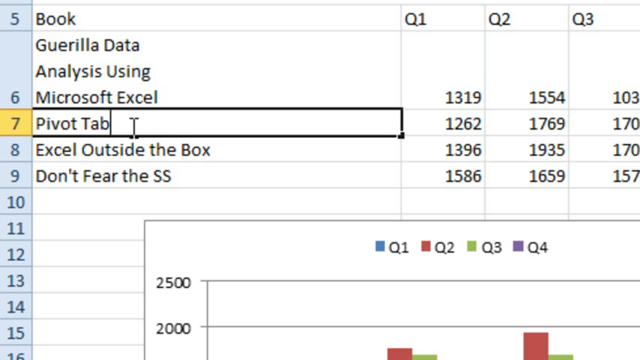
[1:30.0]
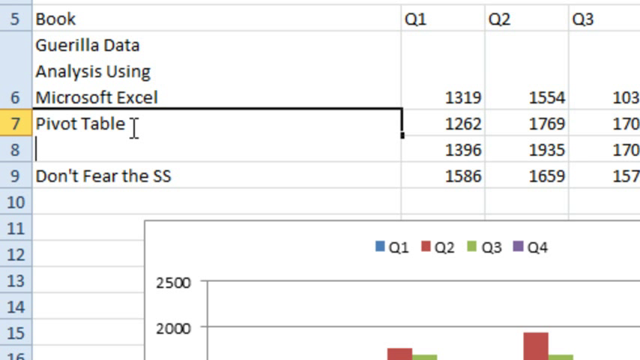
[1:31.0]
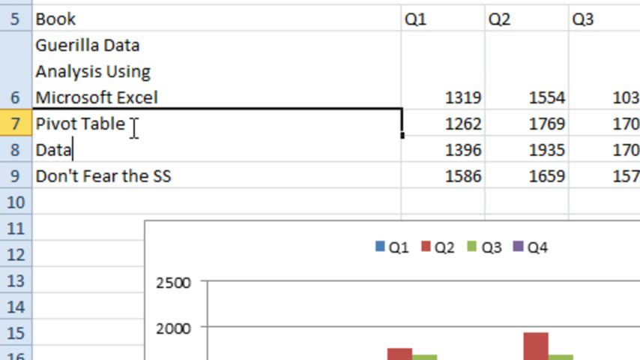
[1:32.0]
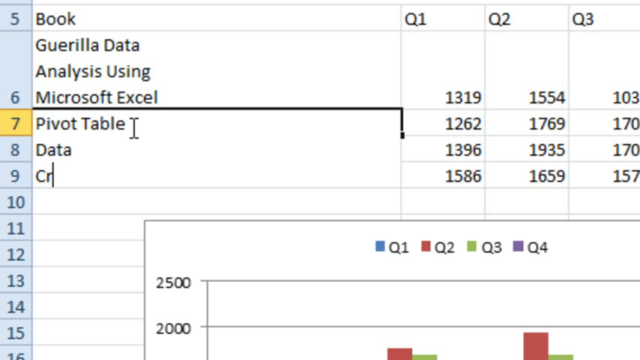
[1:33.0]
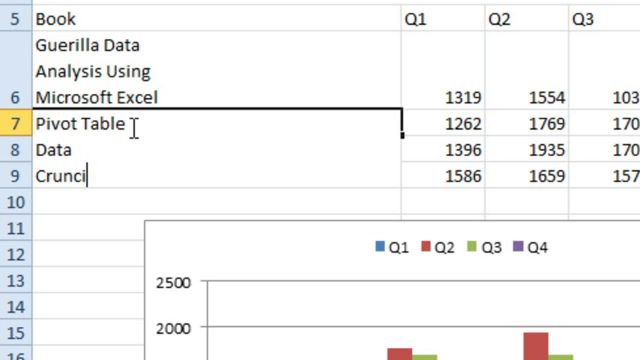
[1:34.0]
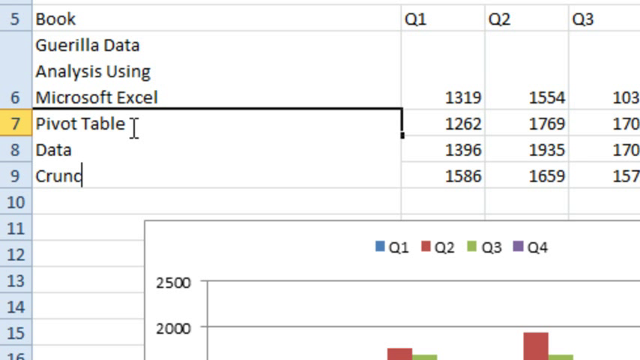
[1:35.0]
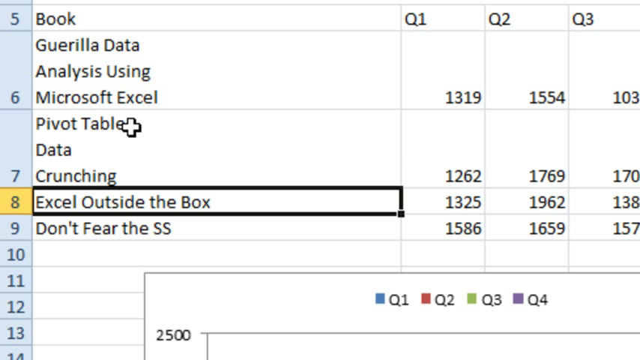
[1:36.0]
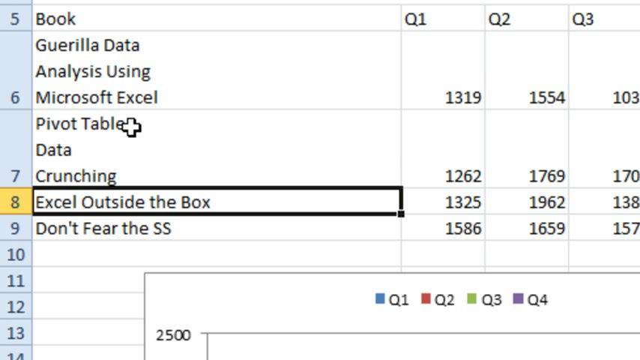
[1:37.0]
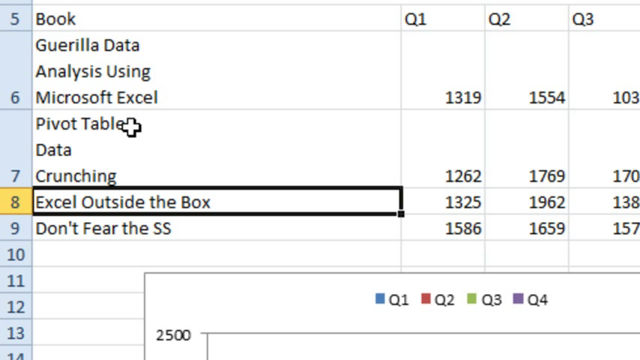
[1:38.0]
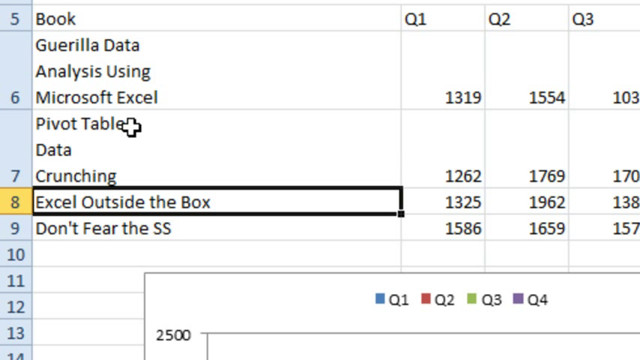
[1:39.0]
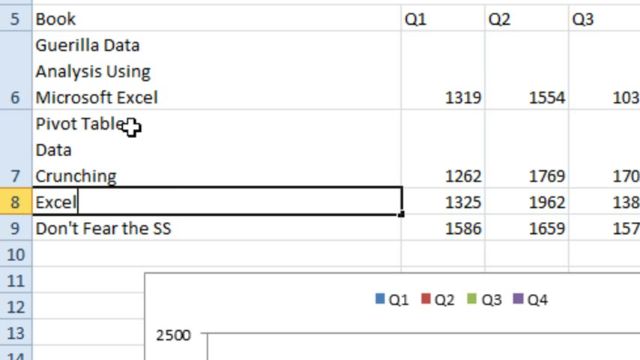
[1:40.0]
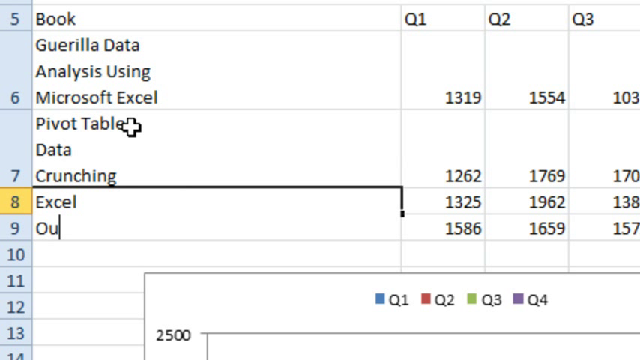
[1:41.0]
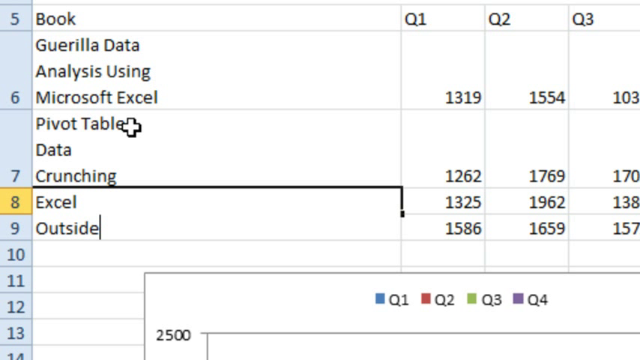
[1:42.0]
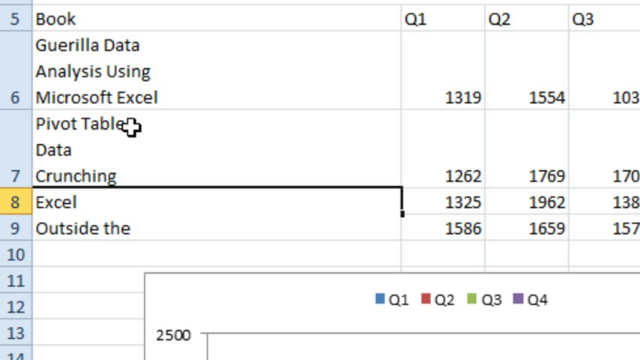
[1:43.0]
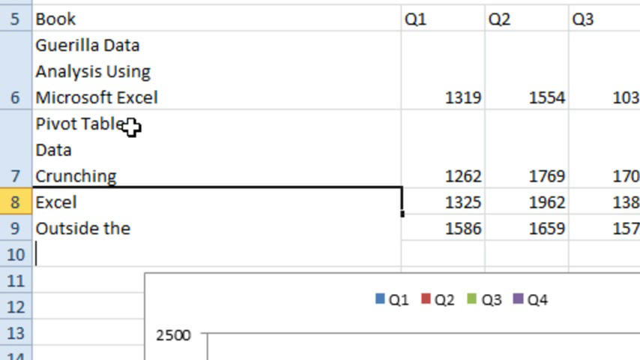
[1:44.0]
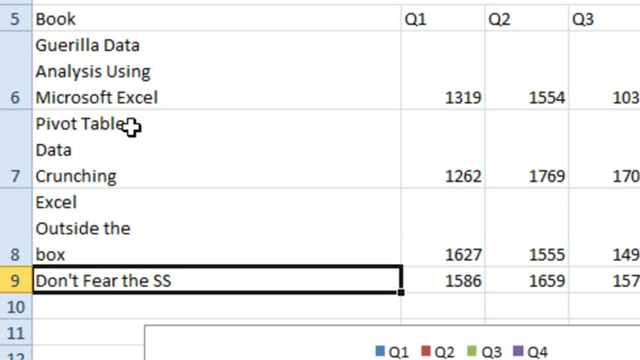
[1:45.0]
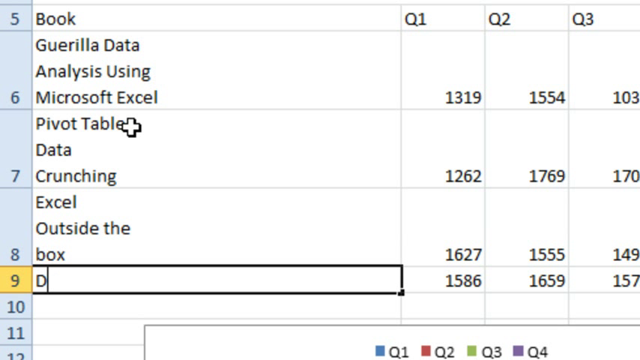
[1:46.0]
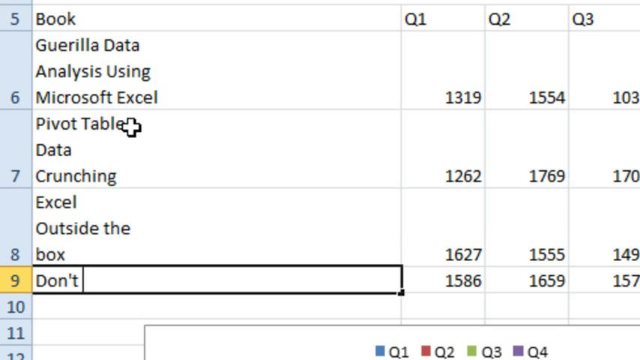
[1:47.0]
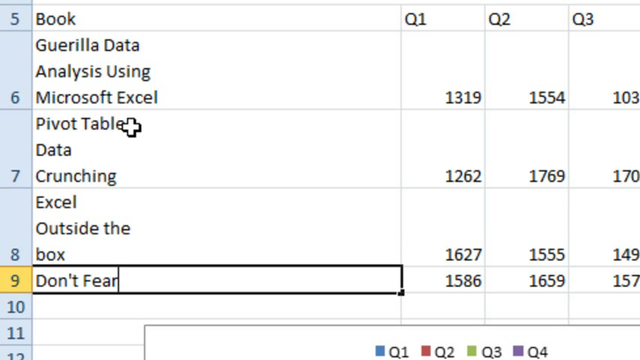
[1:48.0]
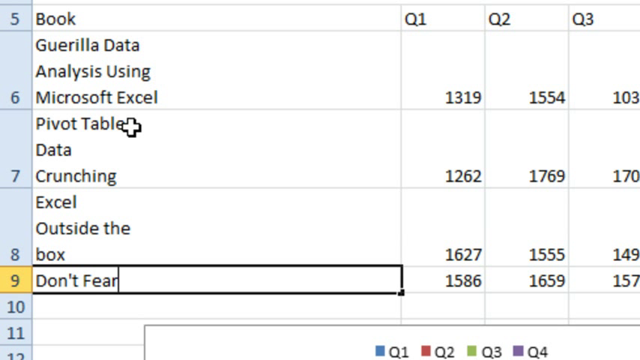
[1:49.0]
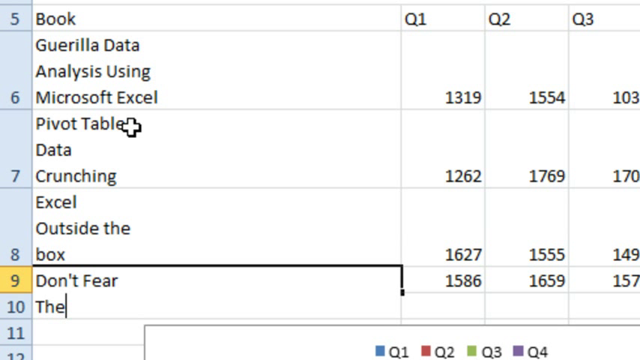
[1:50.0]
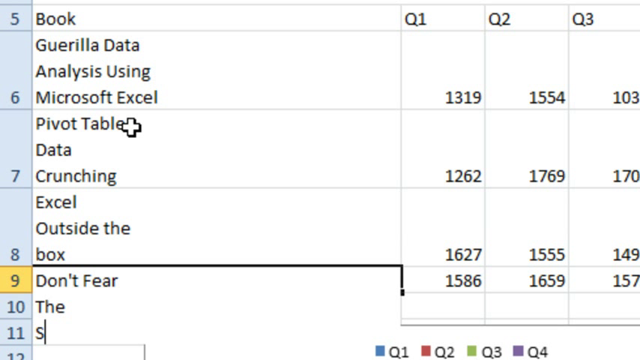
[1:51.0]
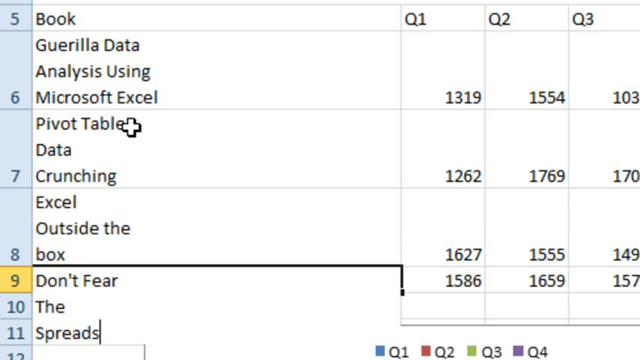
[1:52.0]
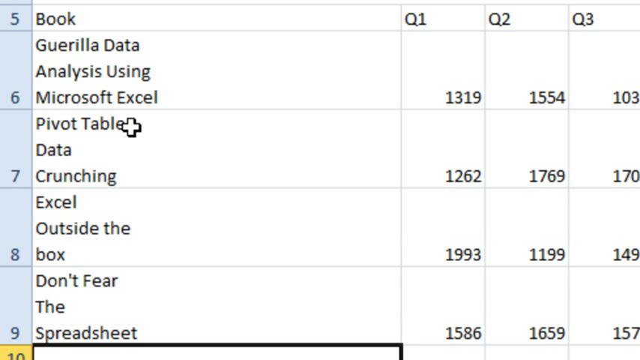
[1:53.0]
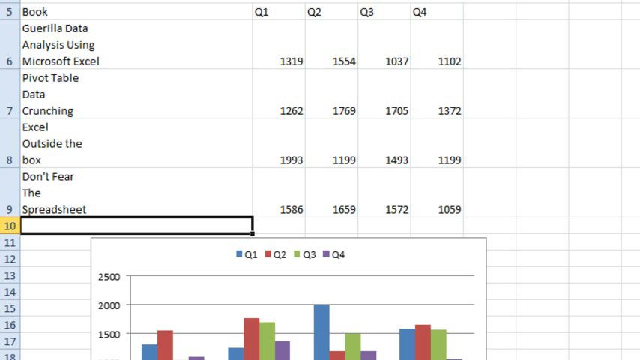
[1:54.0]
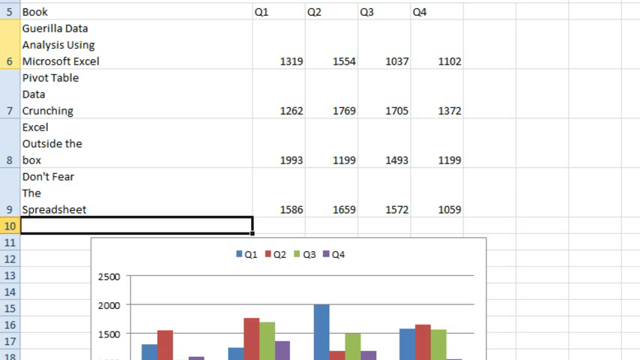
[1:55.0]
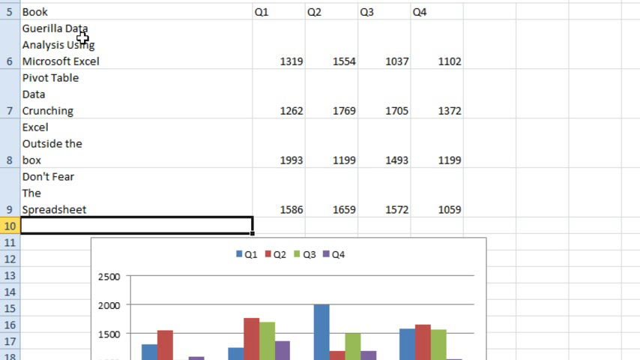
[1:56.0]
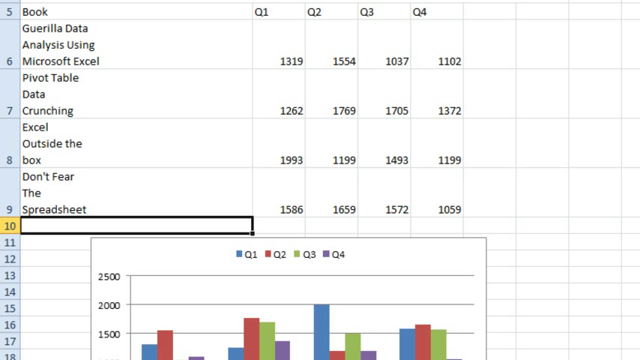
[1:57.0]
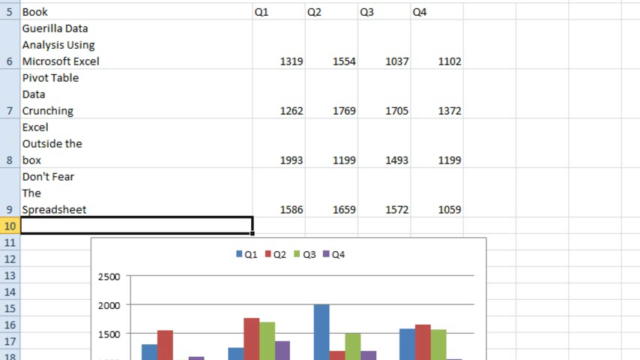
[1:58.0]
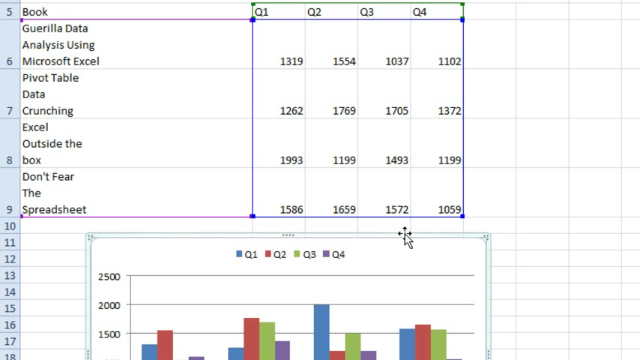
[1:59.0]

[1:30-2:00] Someone records their computer screen with Microsoft Excel open. They type in column A, row 7: "PivotTable", then a line break, "Data" on the second line, and "Crunching" on a third line. They then go to row 8, type the word "Excel" and create a new line. In row 9 they do the same, separating the words already there into three lines: "don't fear" on line one, "the" on line two and "spreadsheet" on line three. They then click on the bar graph at the very bottom and drag it upwards in the spreadsheet, covering information already typed in the various columns. Multiple differently colored lines also appear, showing the various sections being covered.